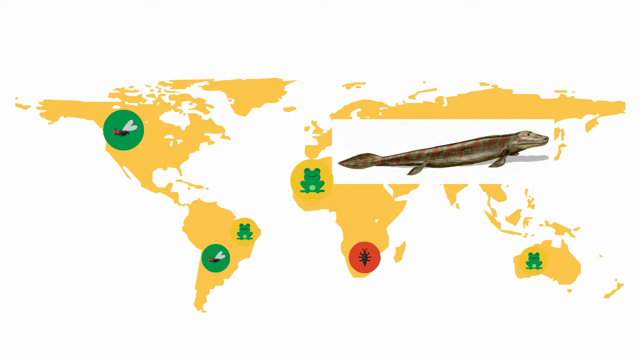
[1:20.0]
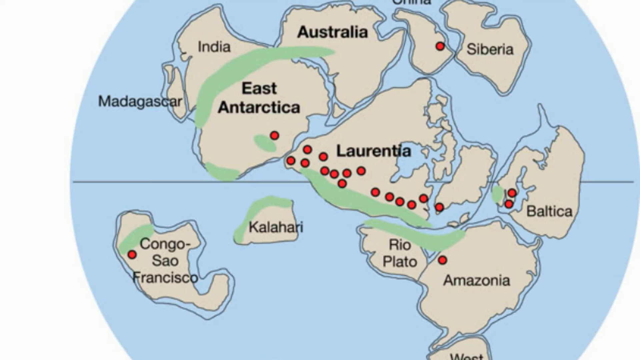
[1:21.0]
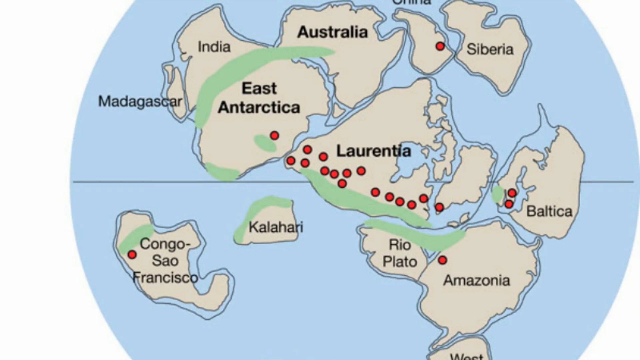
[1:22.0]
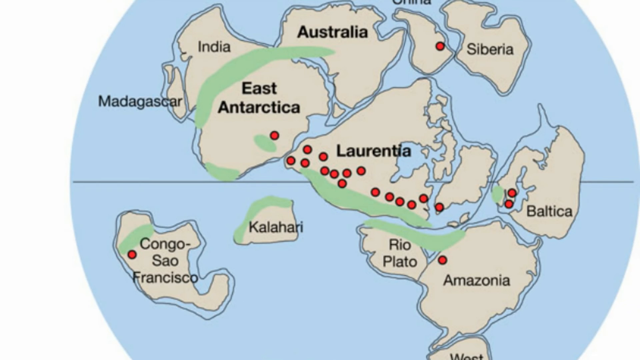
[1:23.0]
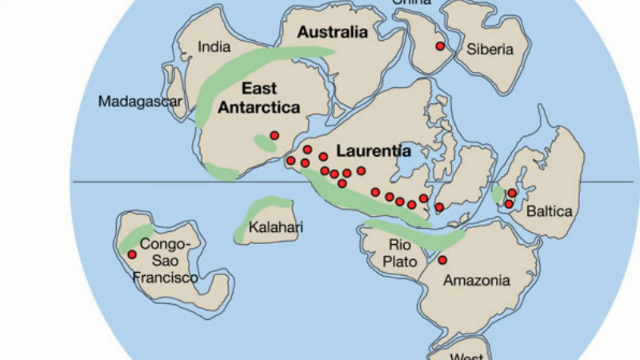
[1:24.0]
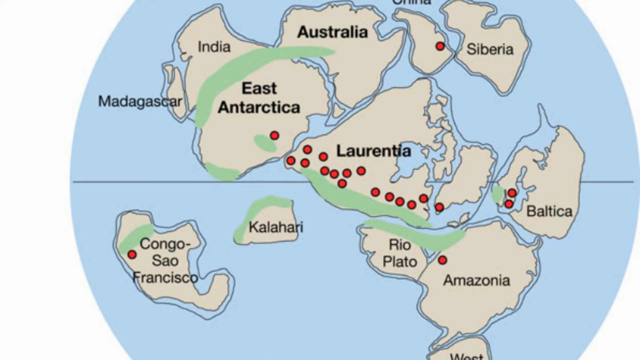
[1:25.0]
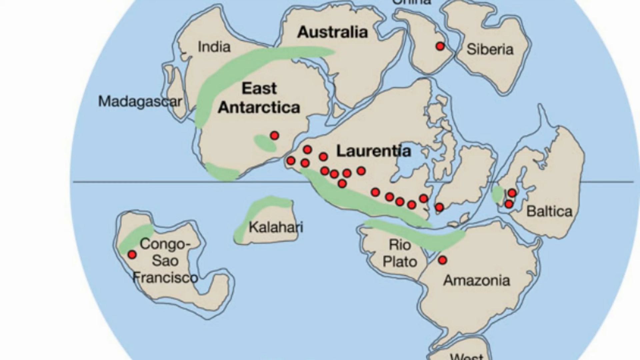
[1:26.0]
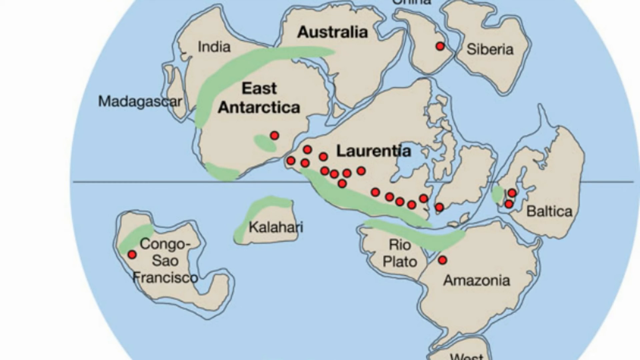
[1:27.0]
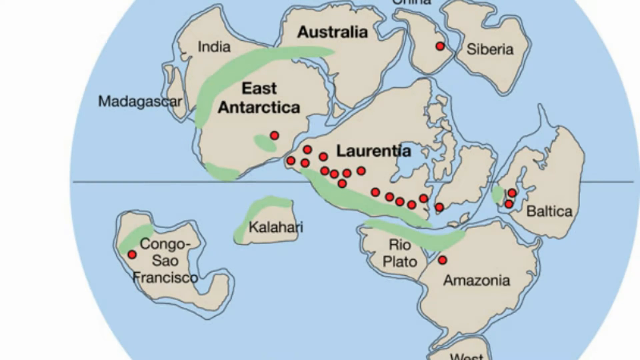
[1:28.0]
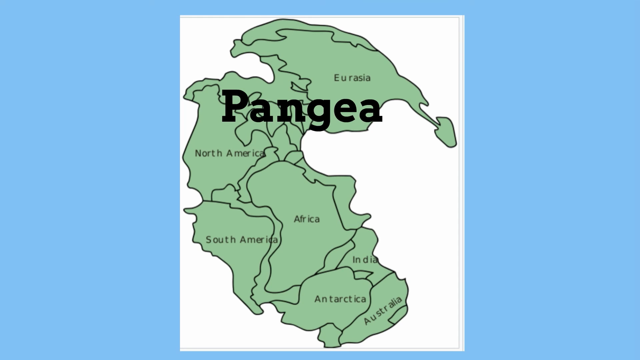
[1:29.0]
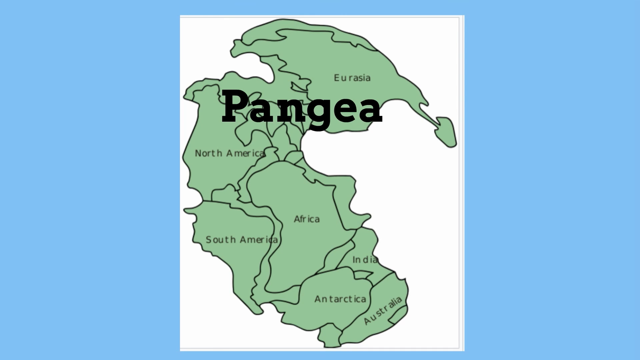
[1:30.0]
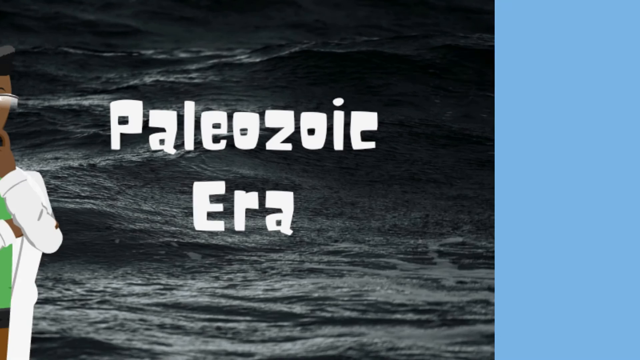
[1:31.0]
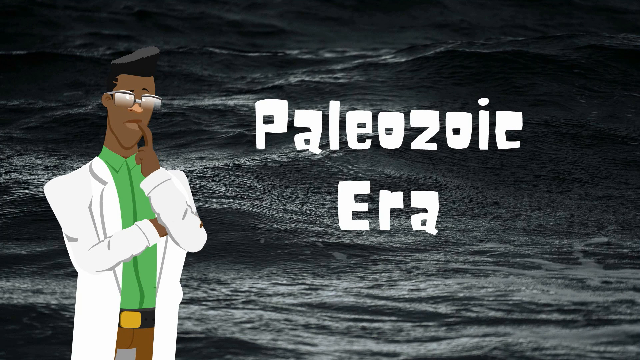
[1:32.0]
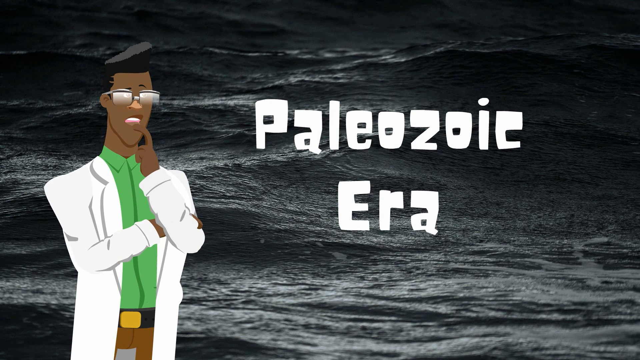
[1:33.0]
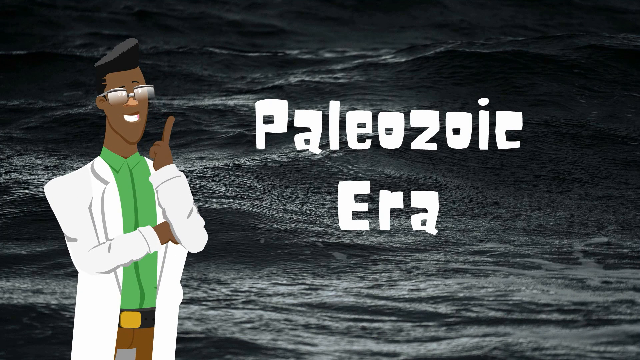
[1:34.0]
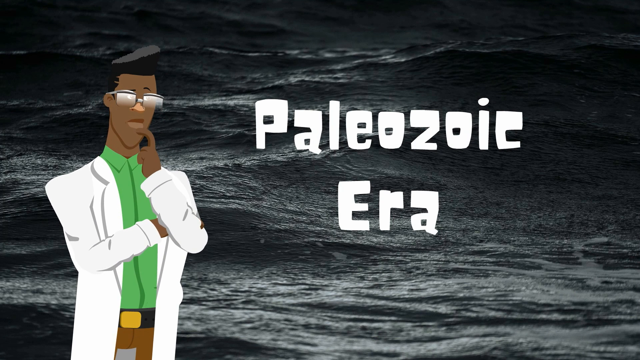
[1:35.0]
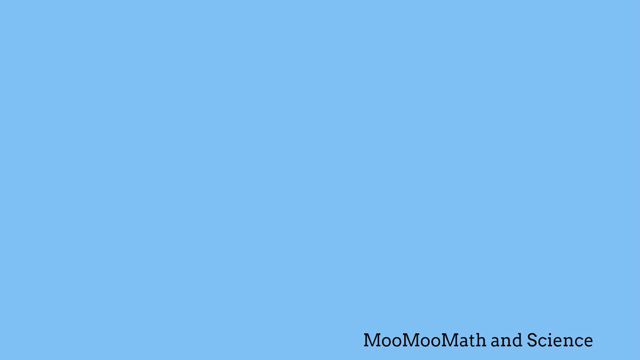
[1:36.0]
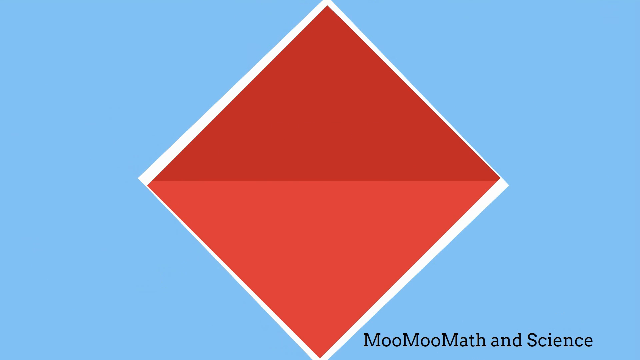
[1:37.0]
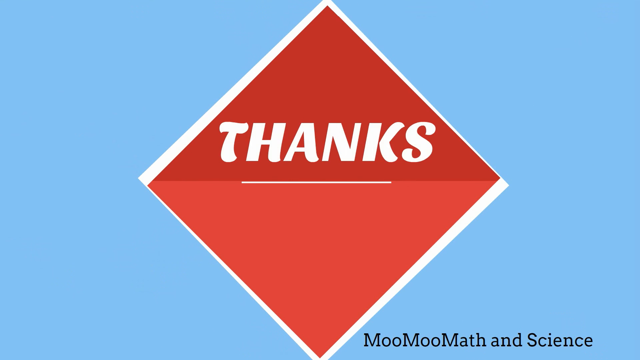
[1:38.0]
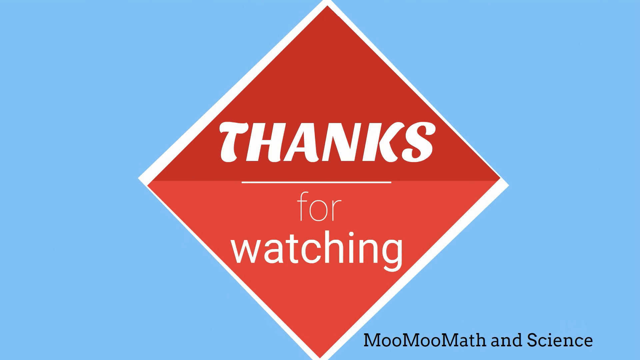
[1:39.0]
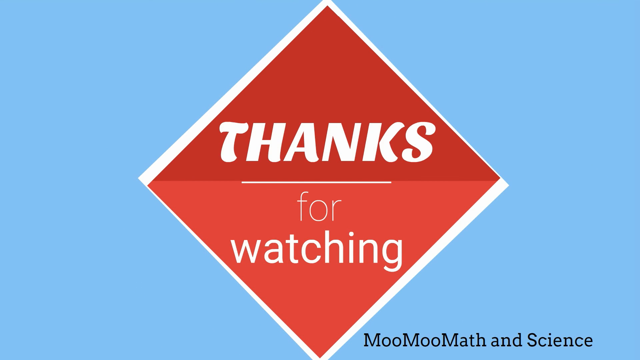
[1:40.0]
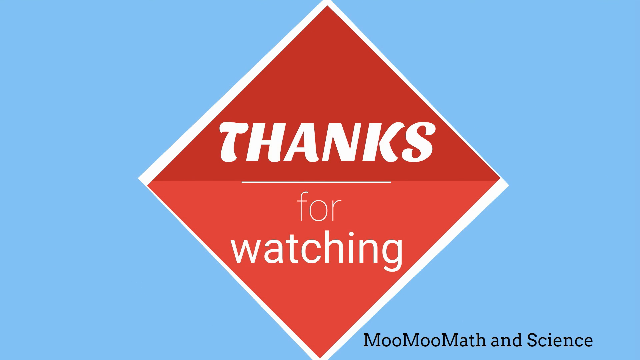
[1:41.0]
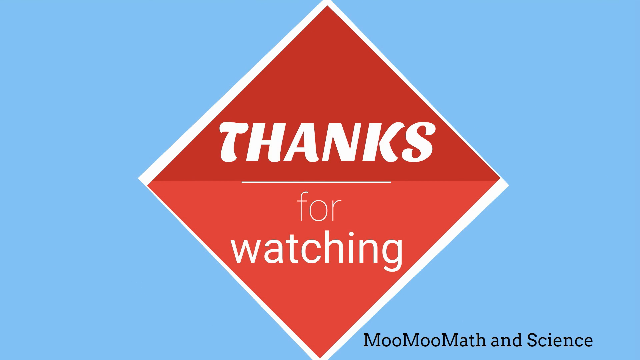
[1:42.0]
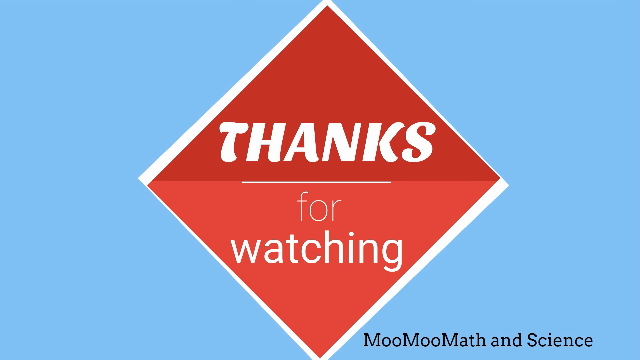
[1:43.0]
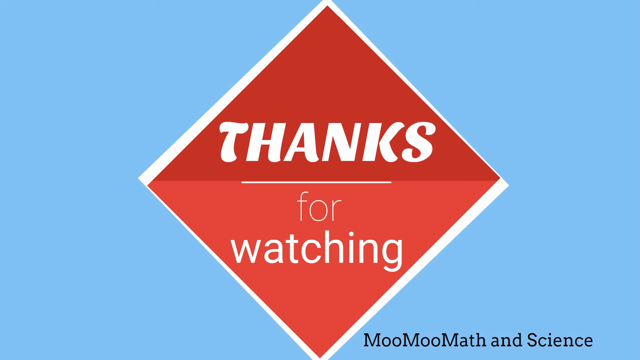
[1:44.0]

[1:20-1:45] A rough sketch in yellow looks like a map but has nothing written on it. A green circle with two flies appears, then pictures of three frogs, and one ant in red. Next is a map with a sky blue background and names on it, including China, India, Australia, Siberia, East Antarctica, Madagascar, Congo, Kalahari, Laurentia, Rio Plateau, Baltica and Amazonia. Red dotted designs are on the map, two beside Baltica and one beside Amazonia. Another map follows with "Pangea" written in big bold letters, with North America below it, Antarctica in the middle and Australia. Then the man with his hand to his mouth appears, and finally "thanks for watching" is shown.